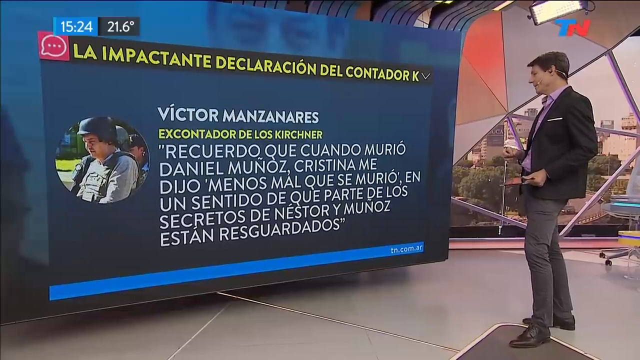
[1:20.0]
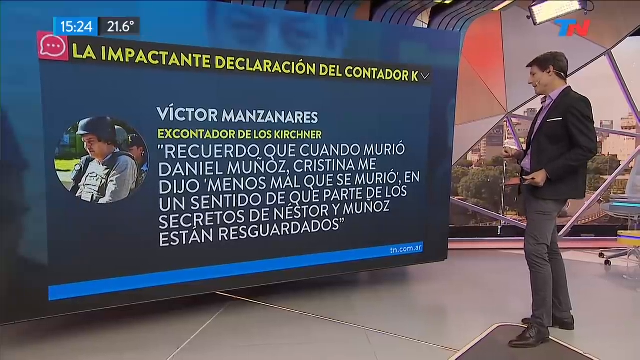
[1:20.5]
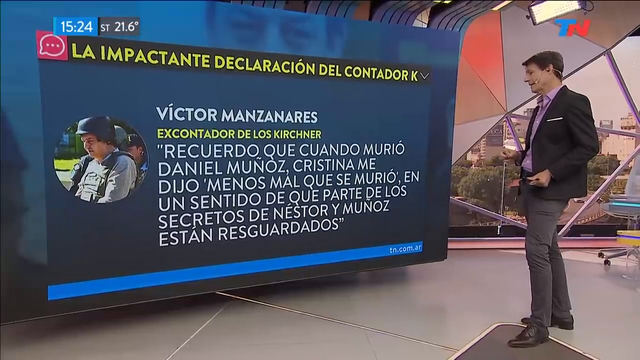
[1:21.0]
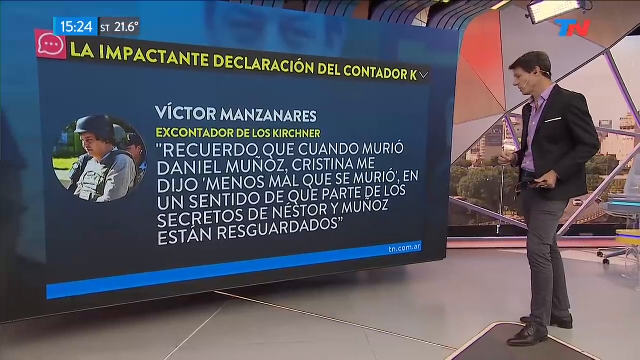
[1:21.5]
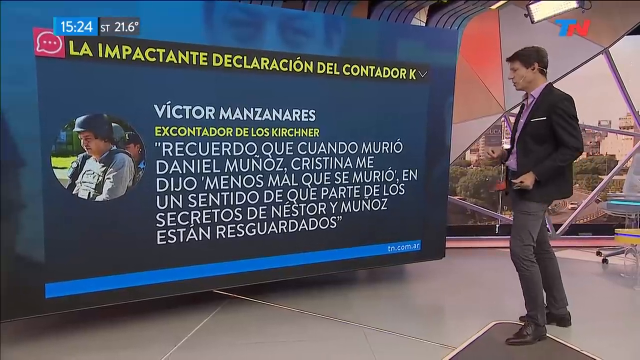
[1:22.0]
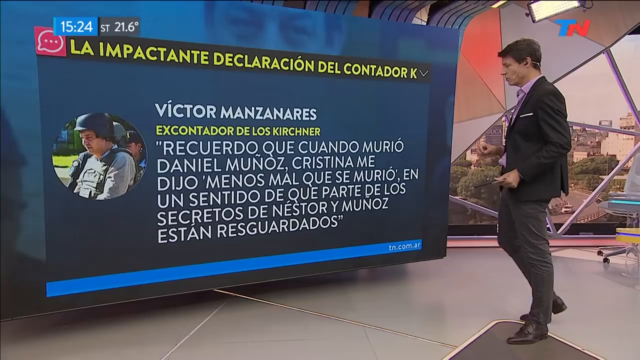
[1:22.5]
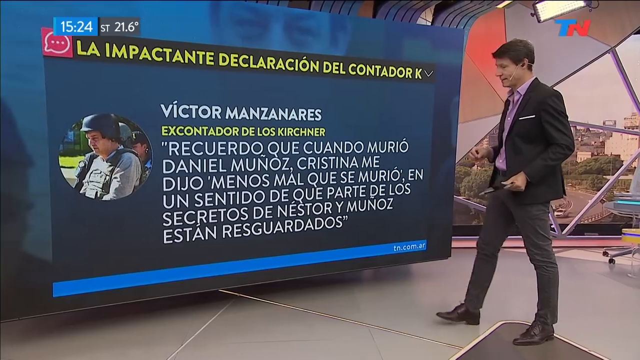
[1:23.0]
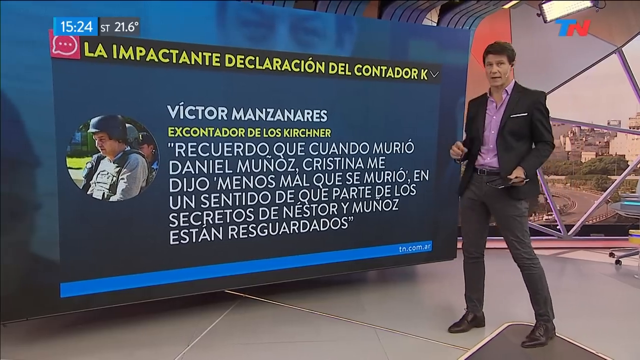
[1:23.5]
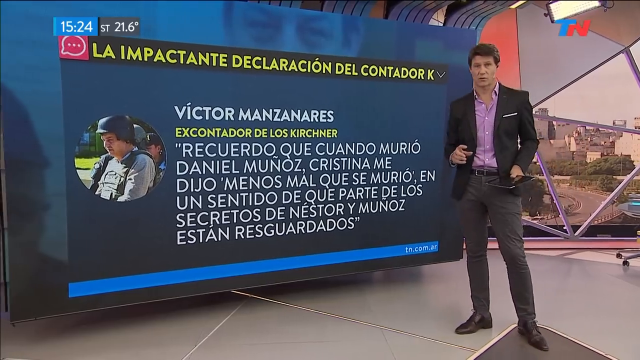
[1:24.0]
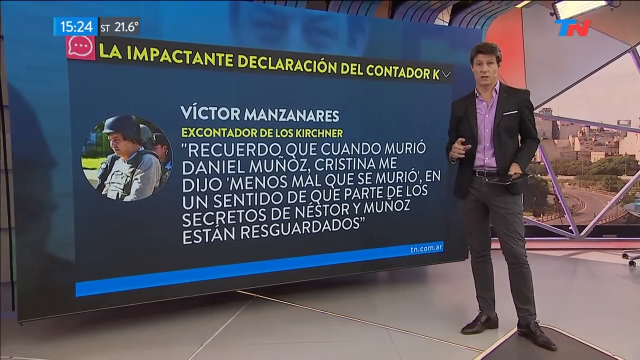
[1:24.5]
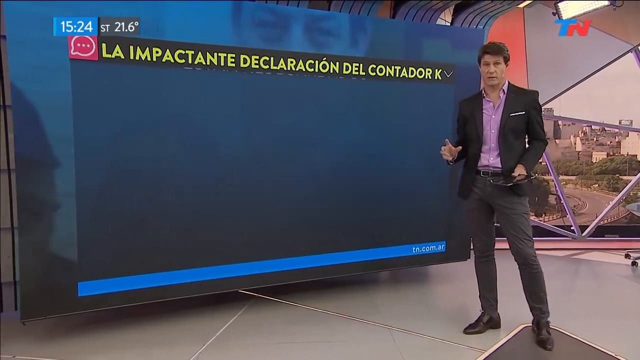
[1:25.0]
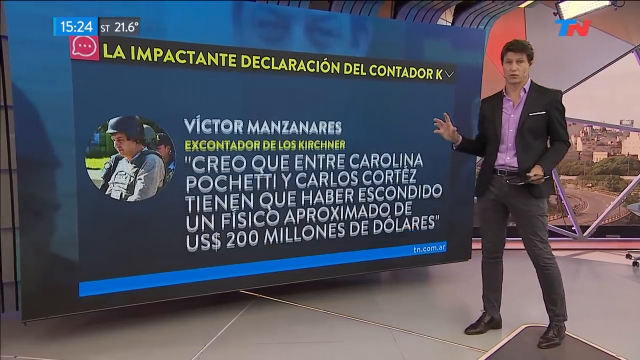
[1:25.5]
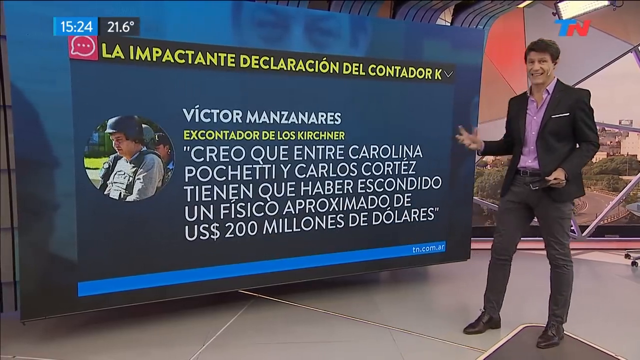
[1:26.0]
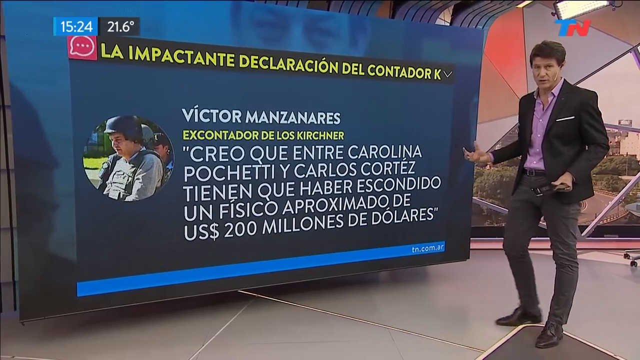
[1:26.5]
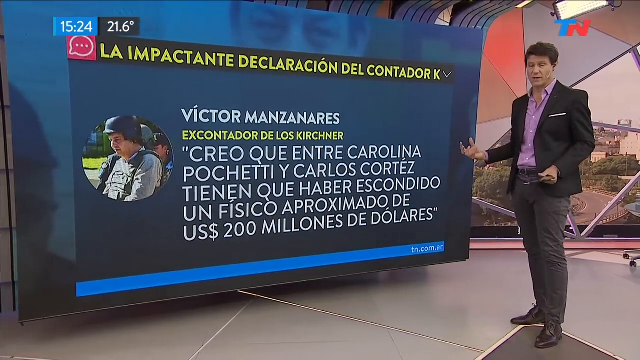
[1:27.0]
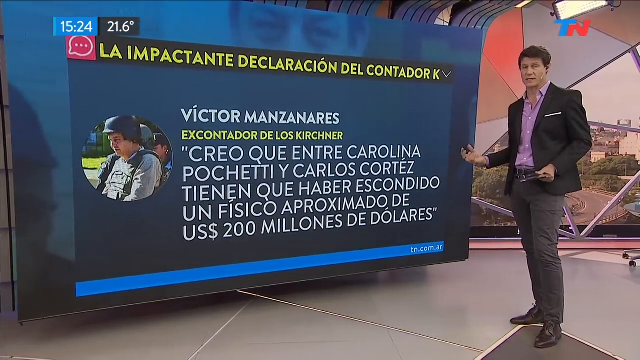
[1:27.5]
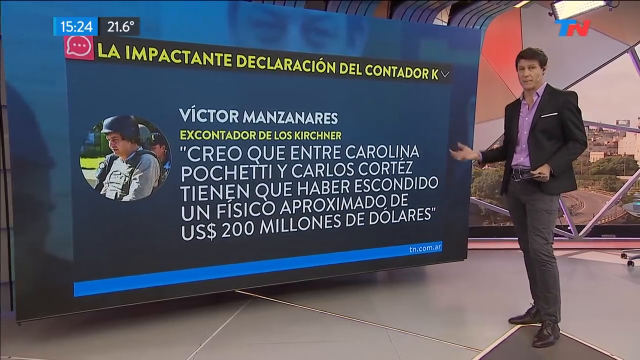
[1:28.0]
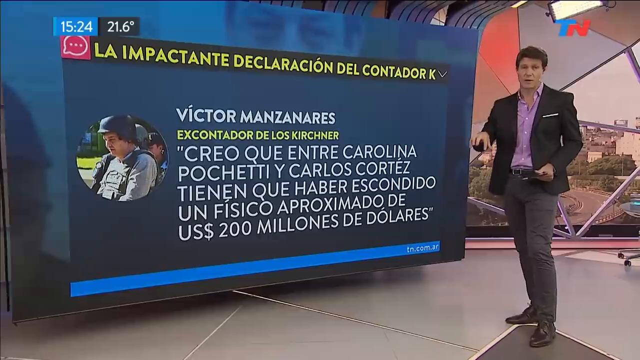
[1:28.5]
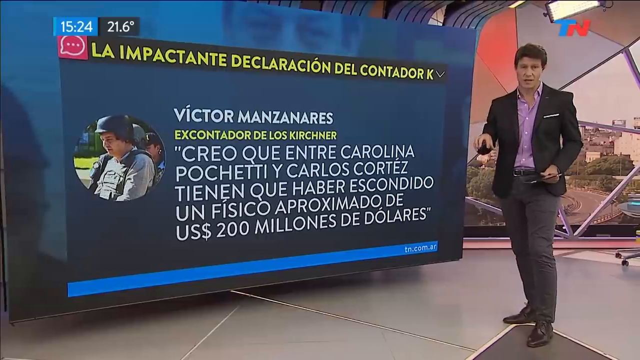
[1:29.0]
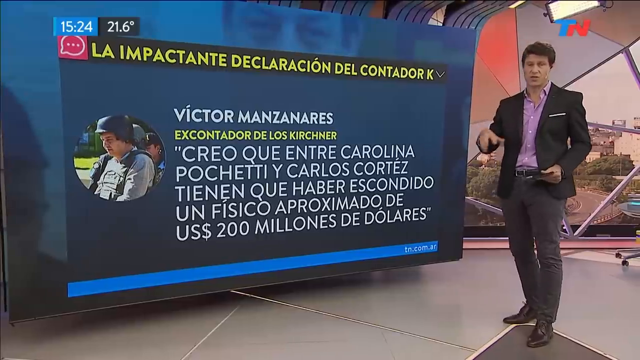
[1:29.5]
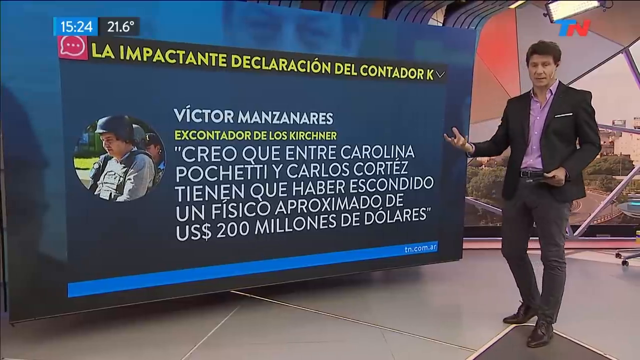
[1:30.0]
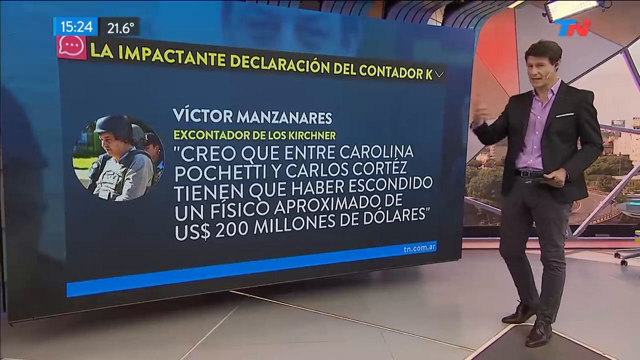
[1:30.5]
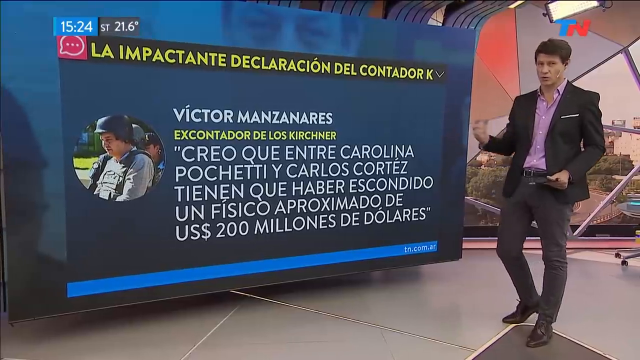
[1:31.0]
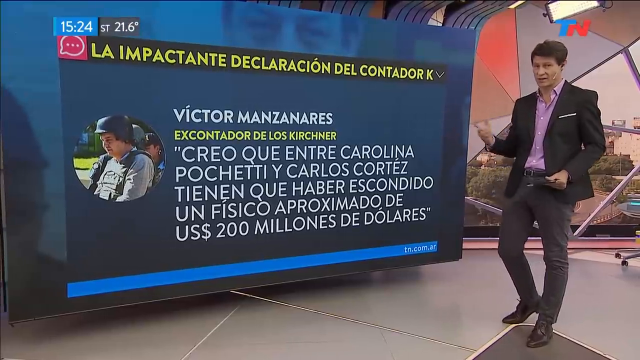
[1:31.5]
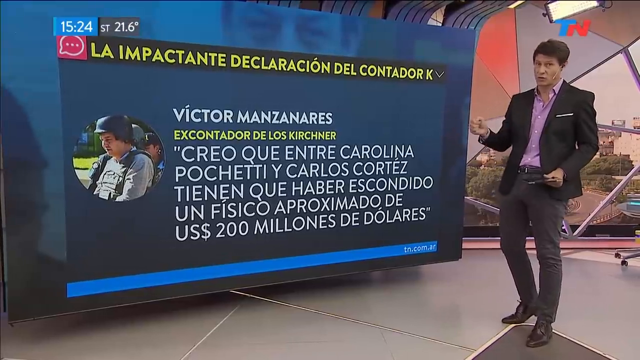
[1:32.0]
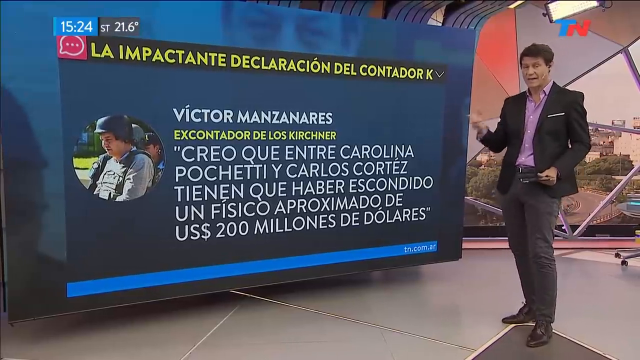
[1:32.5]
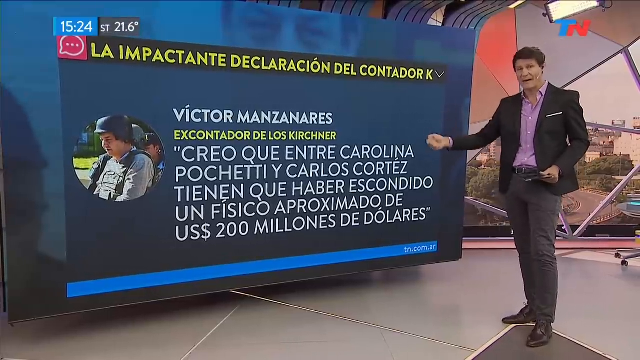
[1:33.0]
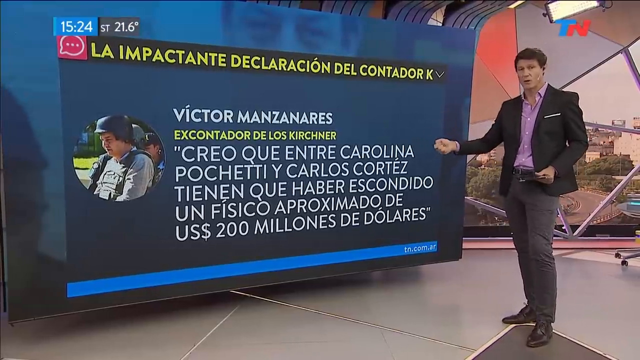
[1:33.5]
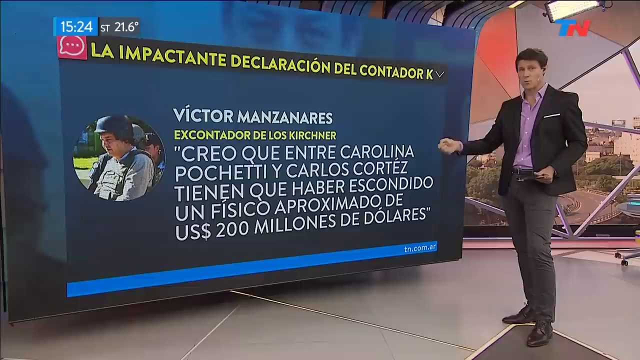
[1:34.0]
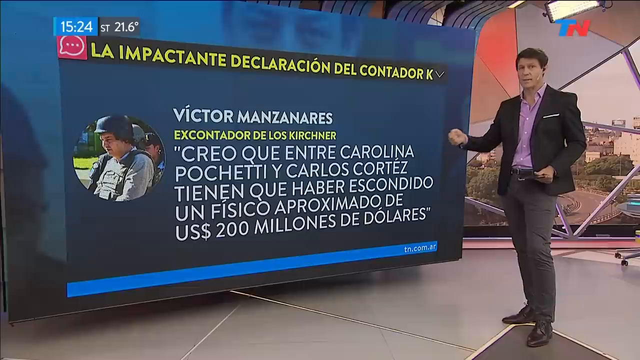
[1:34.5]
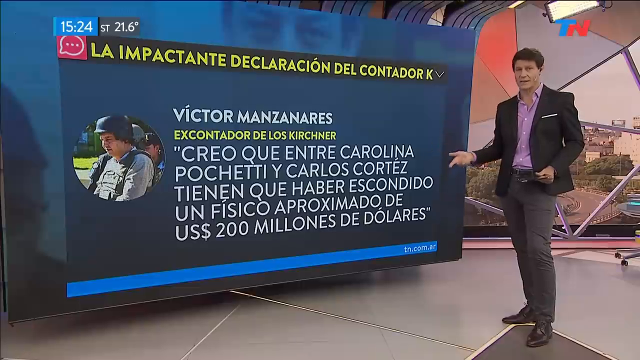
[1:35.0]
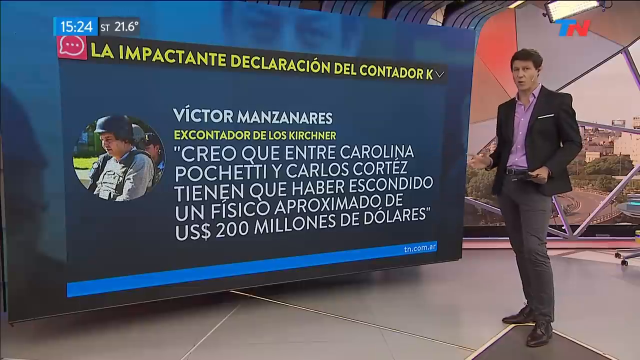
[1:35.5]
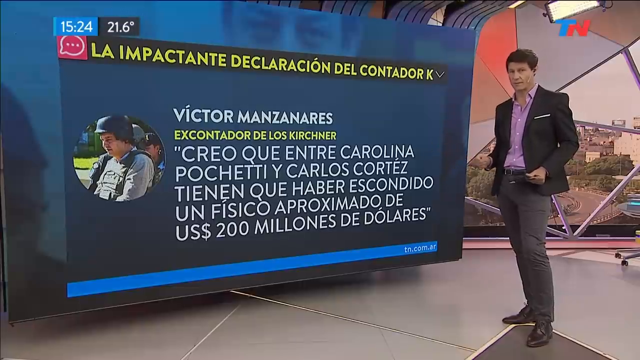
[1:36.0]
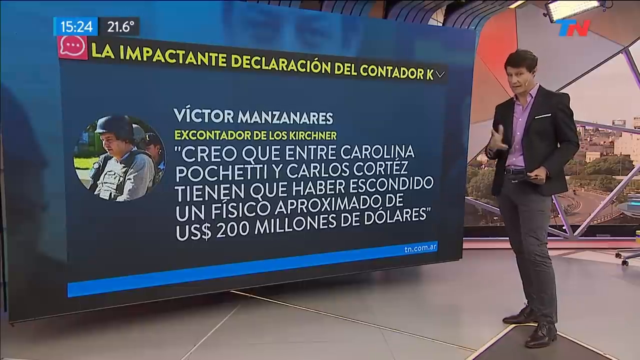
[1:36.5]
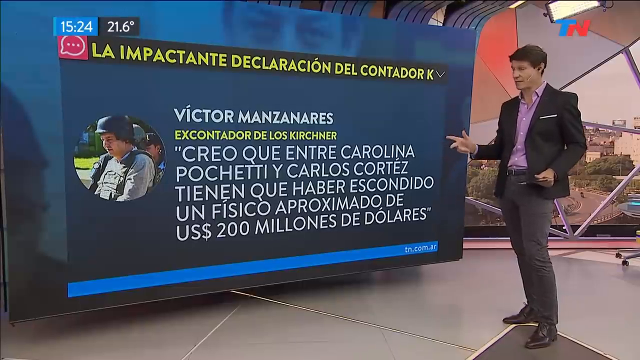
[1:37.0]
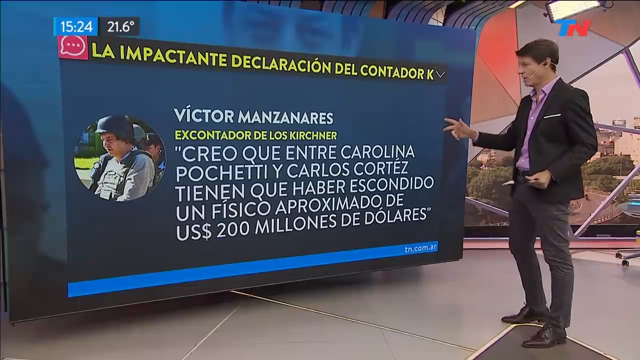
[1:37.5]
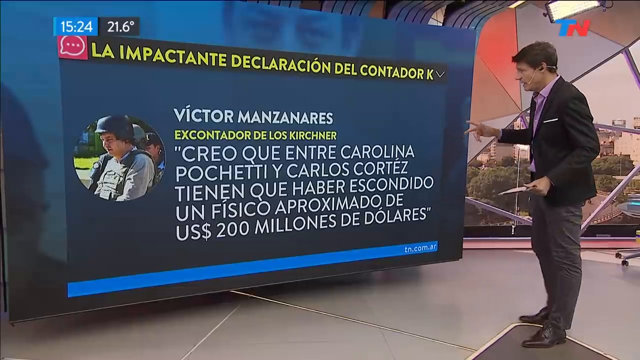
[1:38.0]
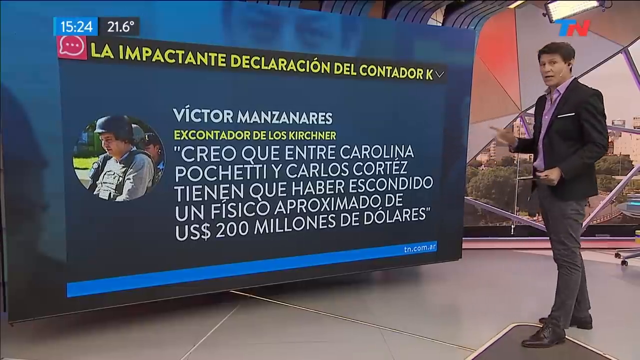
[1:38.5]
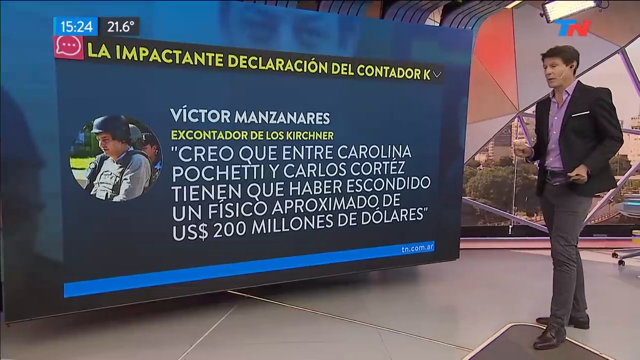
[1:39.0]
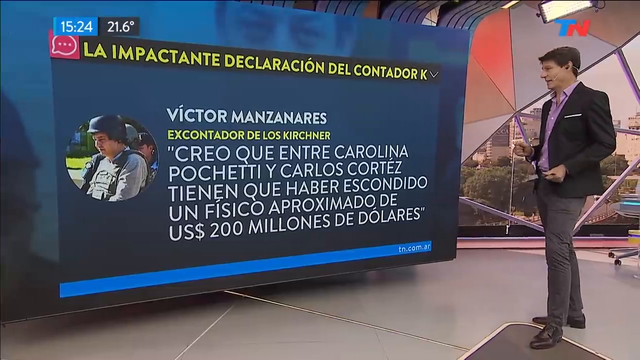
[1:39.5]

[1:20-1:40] In the studio, the reporter begins by looking at the TV screen toward the viewer's left, apparently his right. He then looks back at the camera, his right hand in motion while he talks. The quote on the TV monitor seems to have changed to a different quote, while the circle to its left with the person's photograph stays the same, apparently the same person. The reporter keeps speaking toward the camera, his right arm moving side to side and up and down, then looks back at the TV monitor at the new quote.